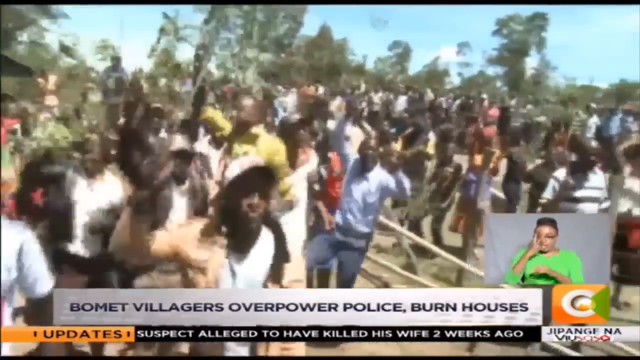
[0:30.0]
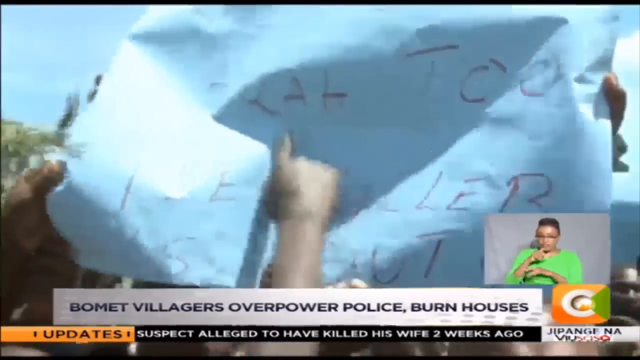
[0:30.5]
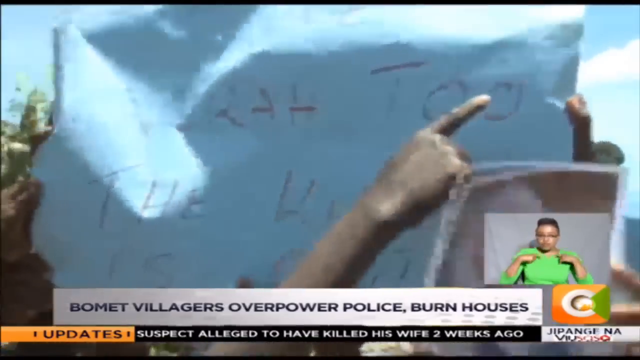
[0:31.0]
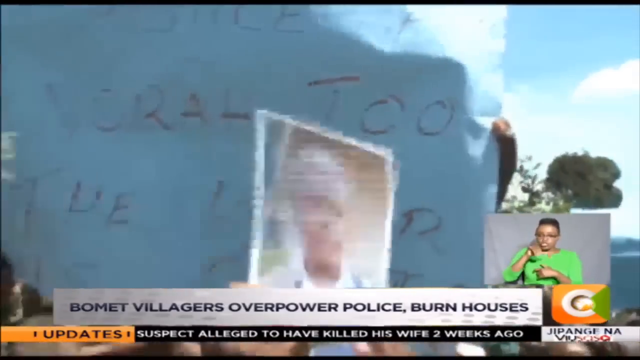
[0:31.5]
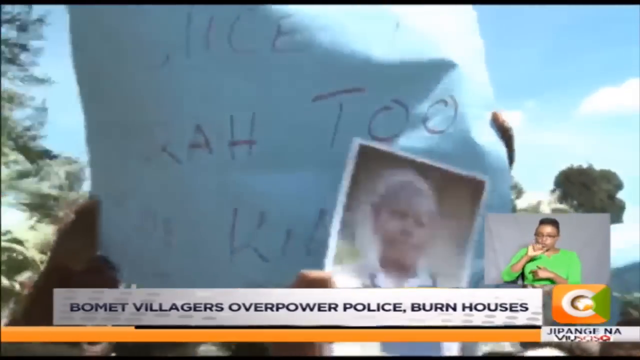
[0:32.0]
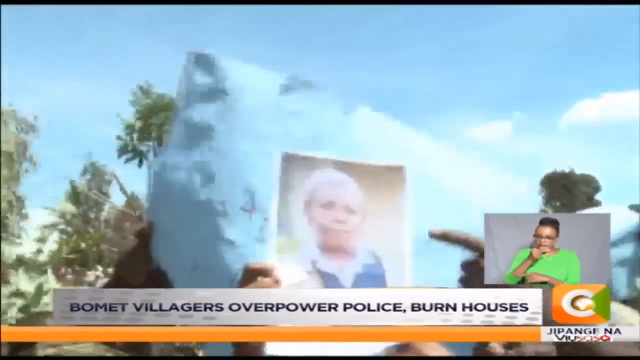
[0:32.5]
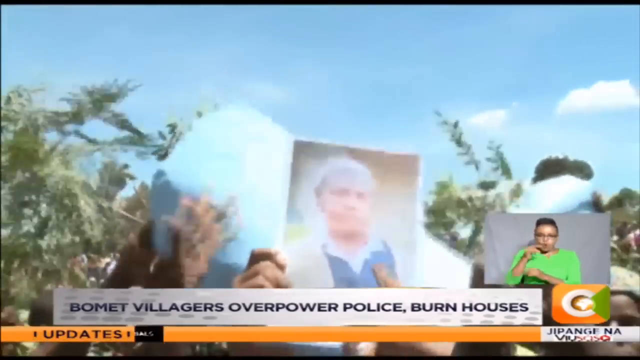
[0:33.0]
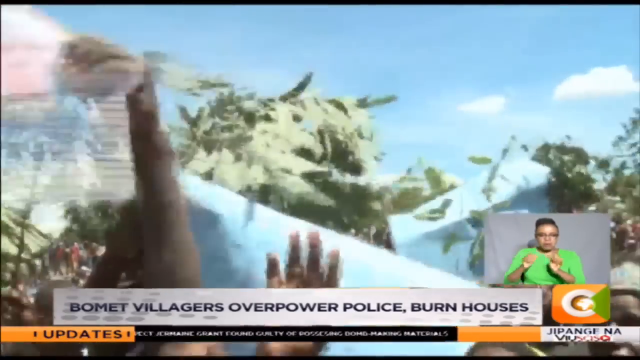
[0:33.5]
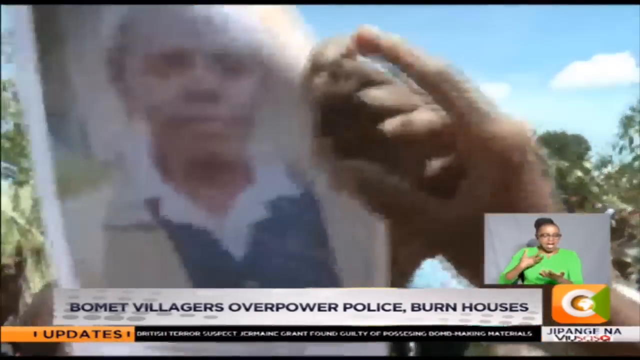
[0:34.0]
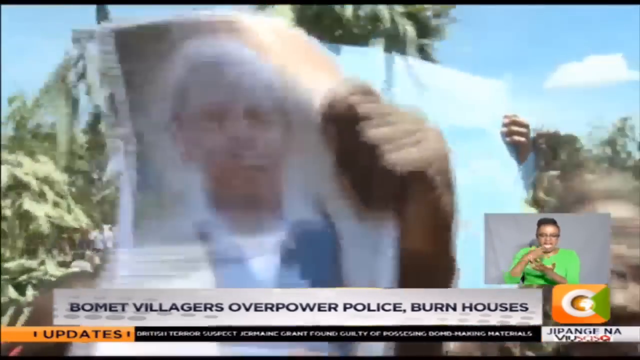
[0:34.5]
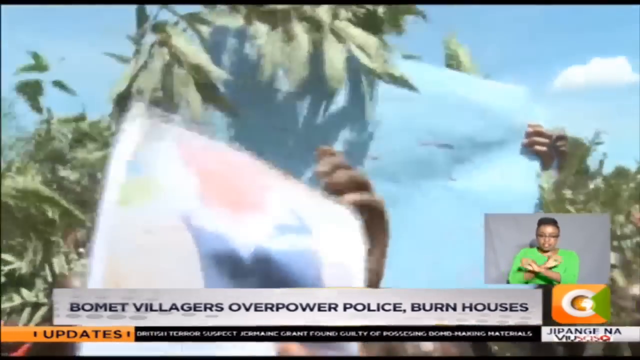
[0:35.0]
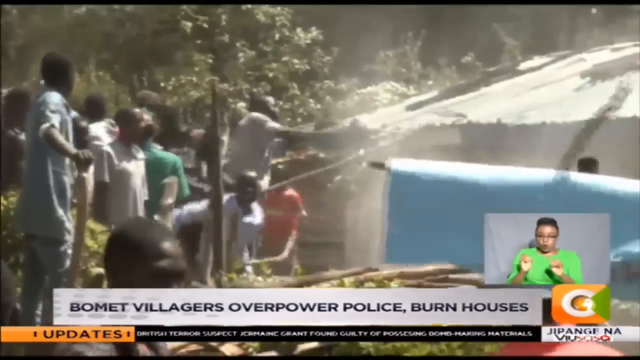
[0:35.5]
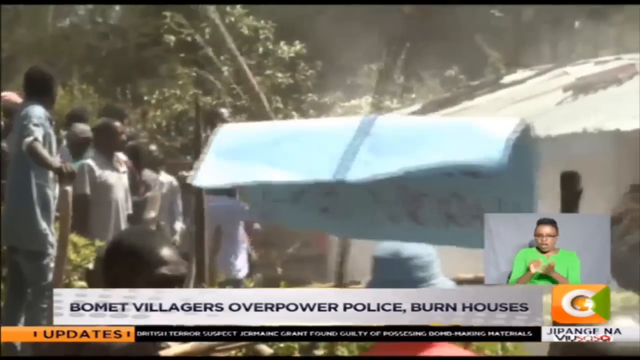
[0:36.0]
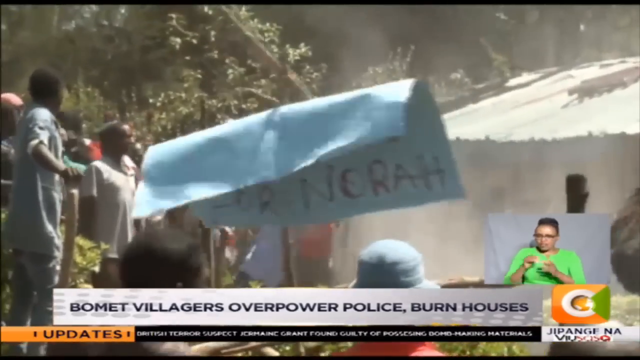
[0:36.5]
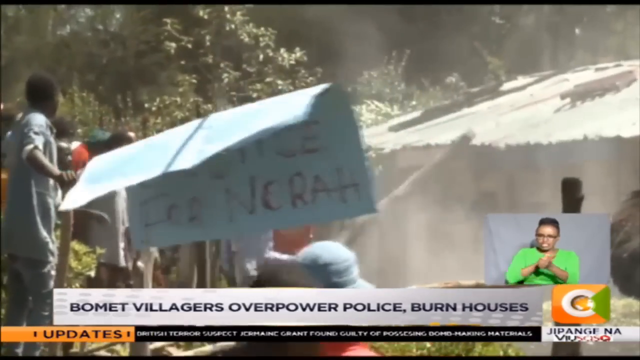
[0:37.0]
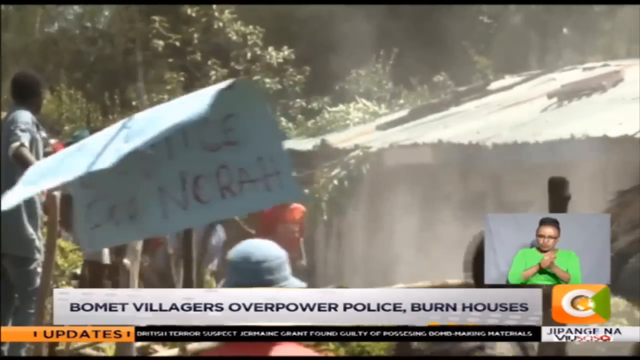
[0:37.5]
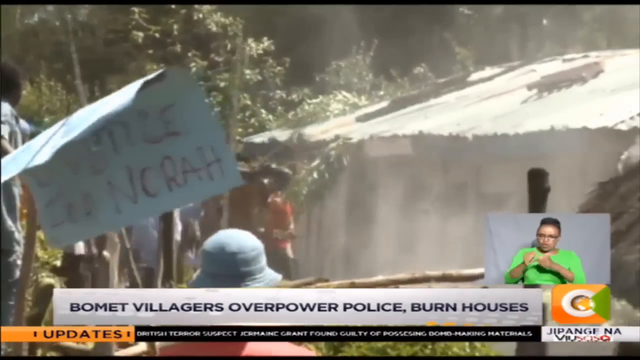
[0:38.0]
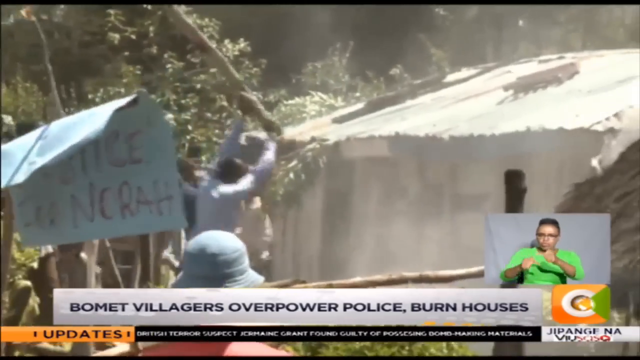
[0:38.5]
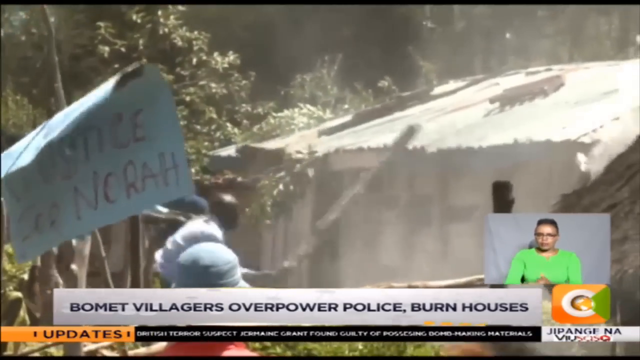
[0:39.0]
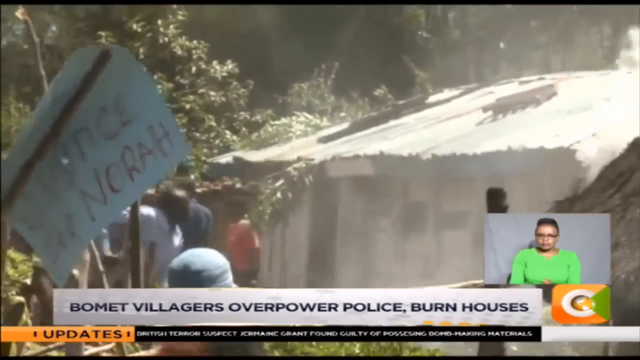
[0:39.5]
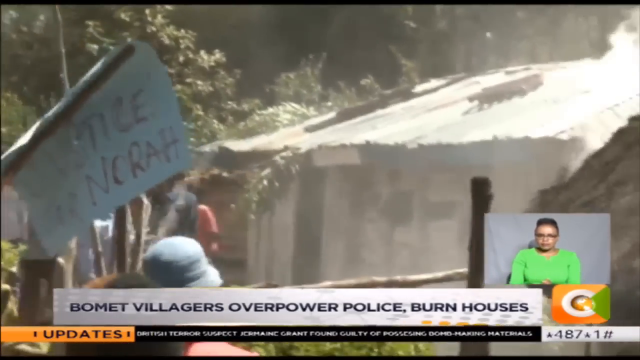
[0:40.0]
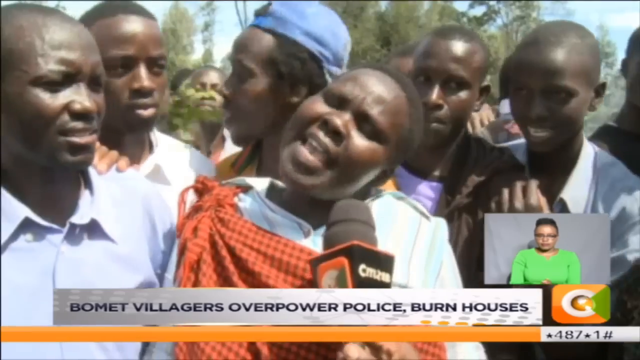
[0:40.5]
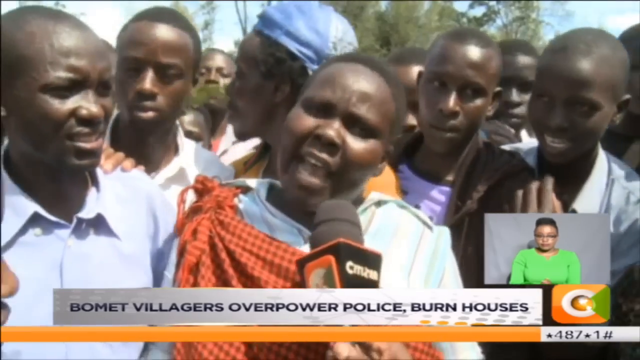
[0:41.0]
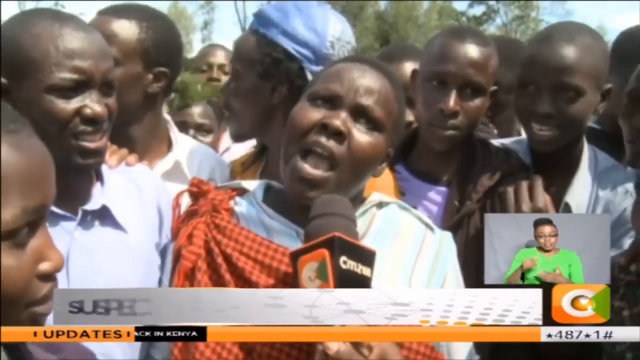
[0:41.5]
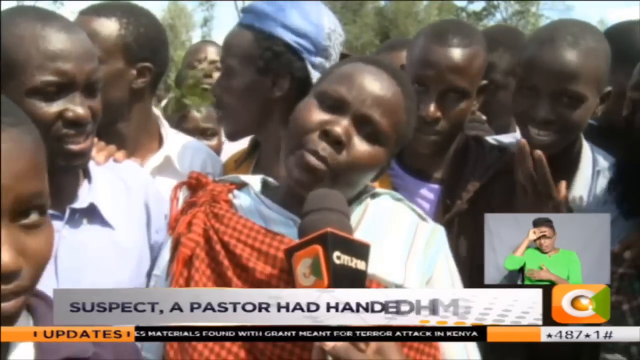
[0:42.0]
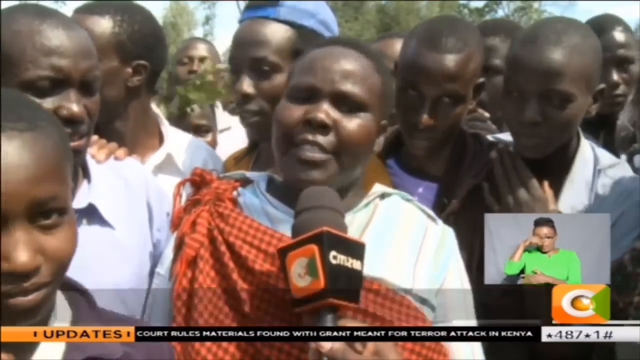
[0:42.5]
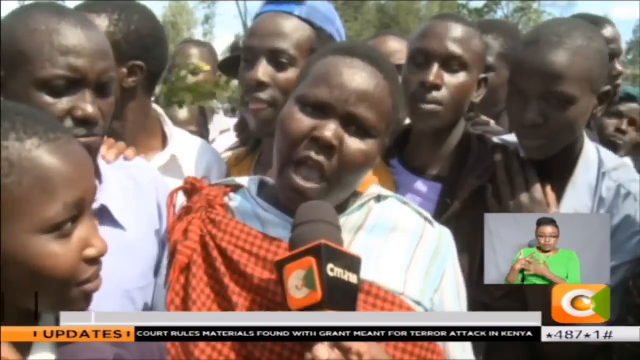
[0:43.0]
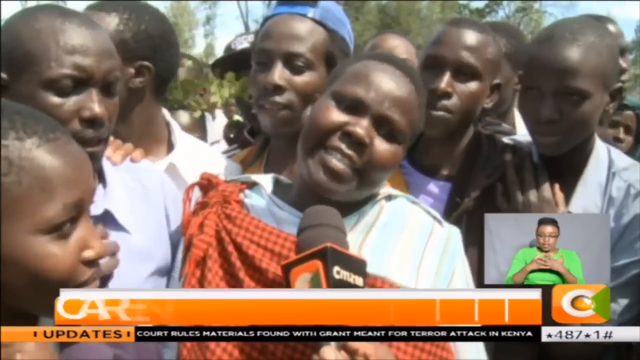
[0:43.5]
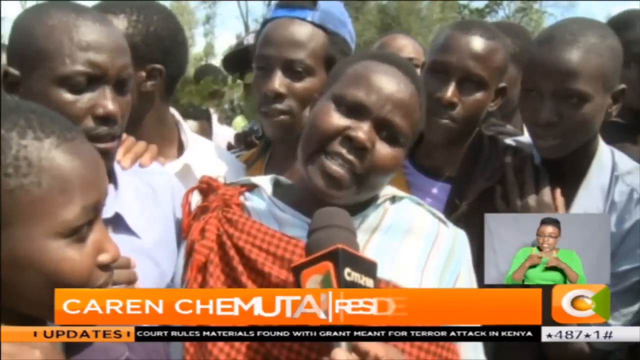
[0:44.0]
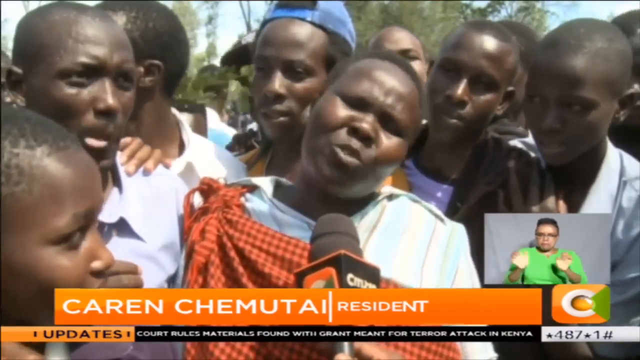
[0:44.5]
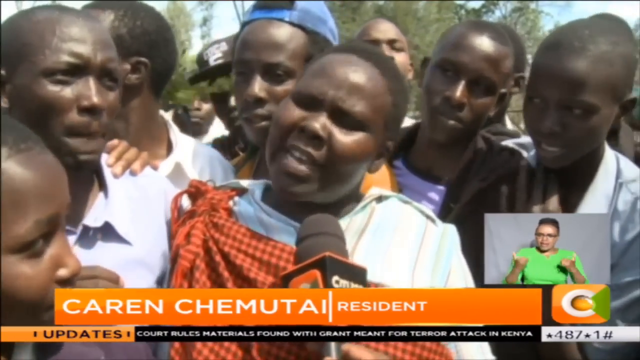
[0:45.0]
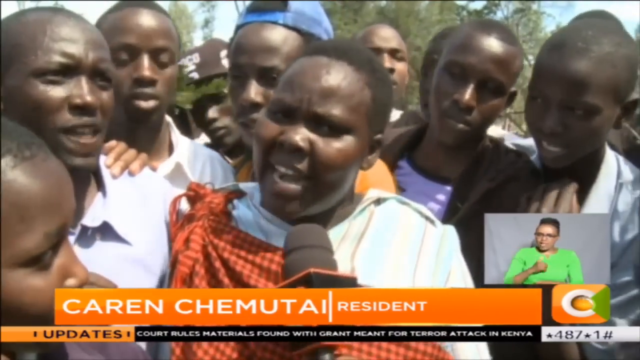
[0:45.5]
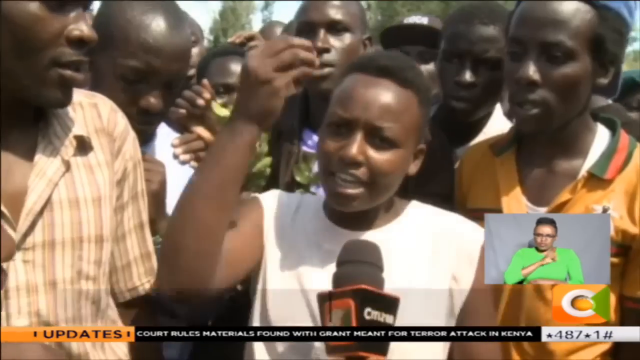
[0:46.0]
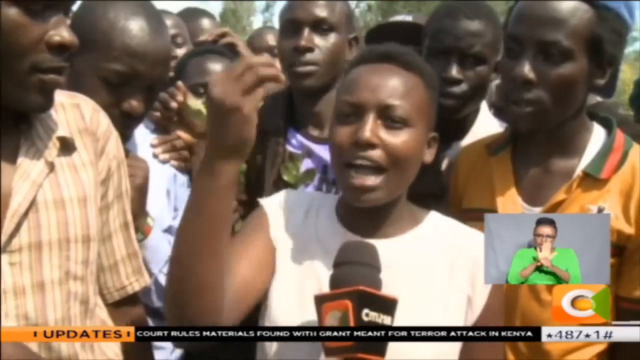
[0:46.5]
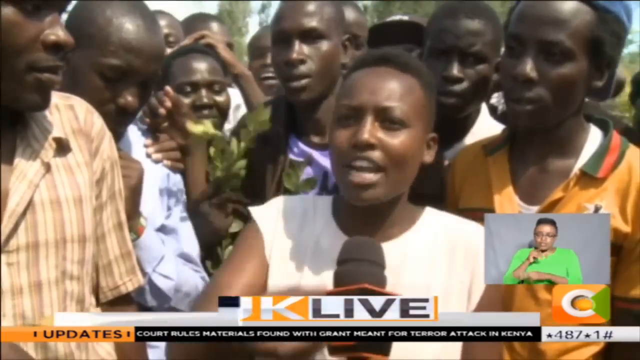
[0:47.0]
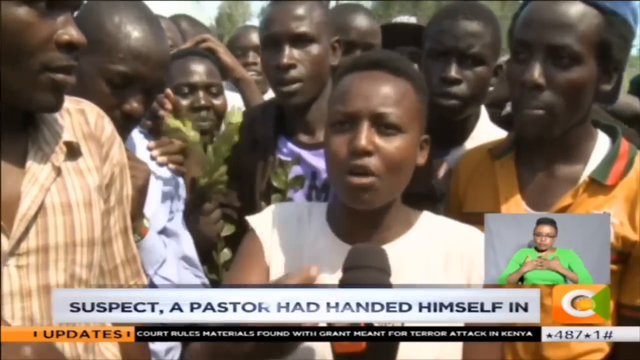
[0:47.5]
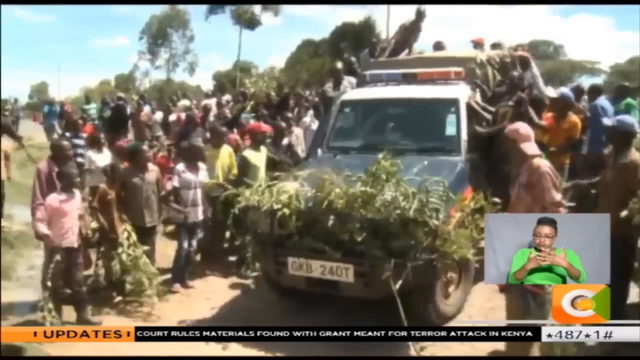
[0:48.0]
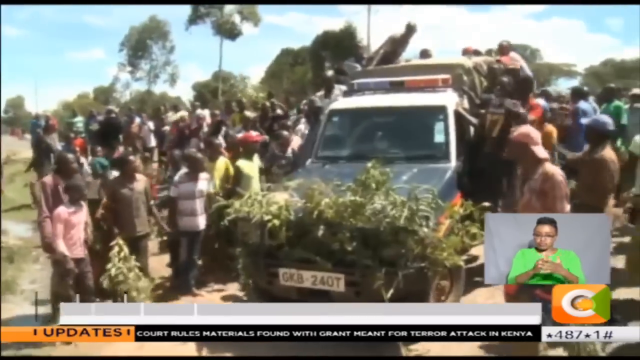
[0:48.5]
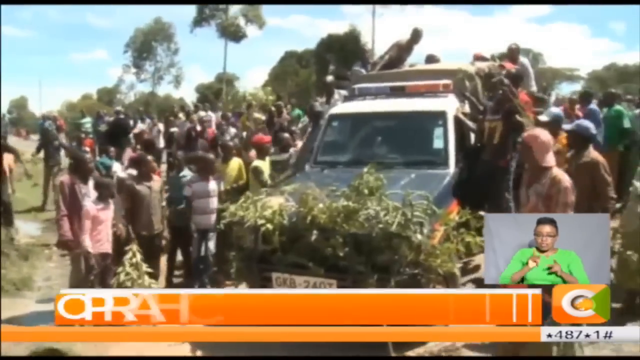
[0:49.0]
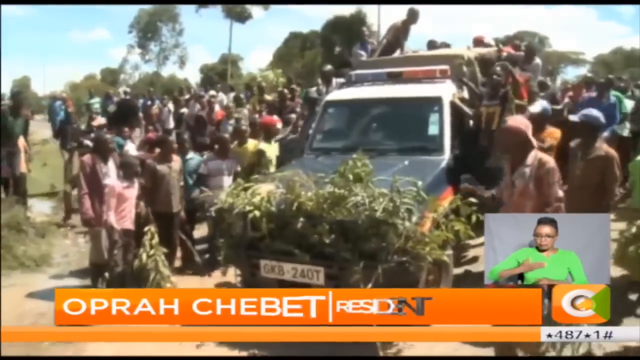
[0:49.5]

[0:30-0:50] A large crowd of people who look very agitated and angry jump up and down while waving branches and other items in the air, and the video cuts to one of their signs. A title at the bottom reads "Bomet villagers overpower police, burn houses", with smaller text underneath reading "suspect alleged to have killed his wife 2 weeks ago." A person holds an image of a woman up close to the camera, and then more people are shown rioting, hitting a house with sticks. A close-up of a large crowd shows one person being interviewed, with a title that reads "suspect, a pastor had handed himself in". The name of the woman being interviewed is then shown as Caren Chemuta, and then another person is interviewed, using their hands in a dramatic gesture as they speak. A vehicle with lights on the top and plants on the front slowly drives forward as a number of people jump onto it.